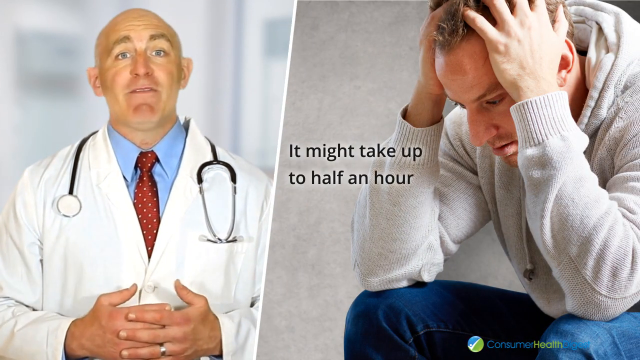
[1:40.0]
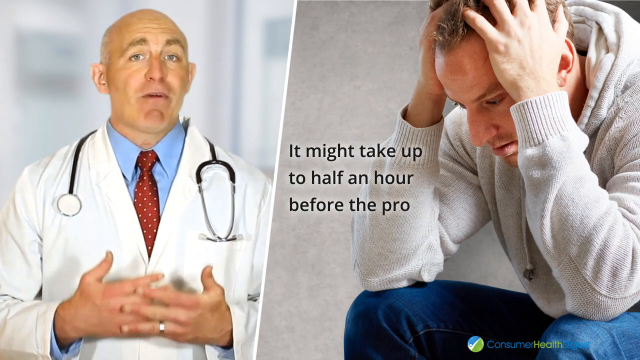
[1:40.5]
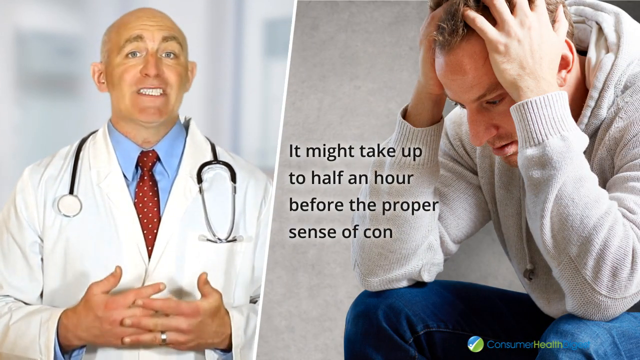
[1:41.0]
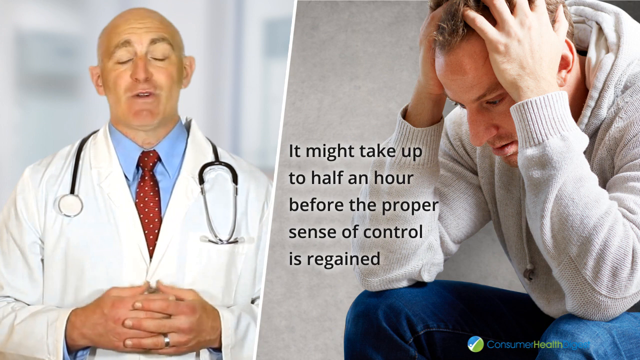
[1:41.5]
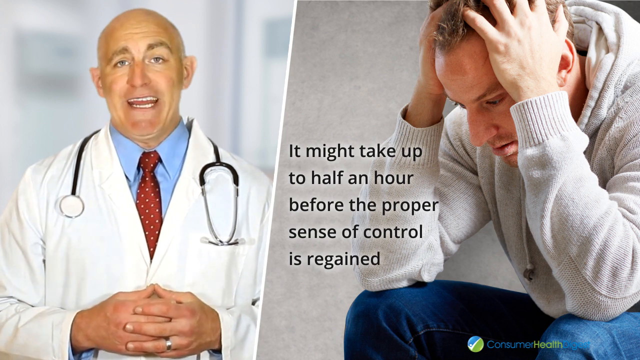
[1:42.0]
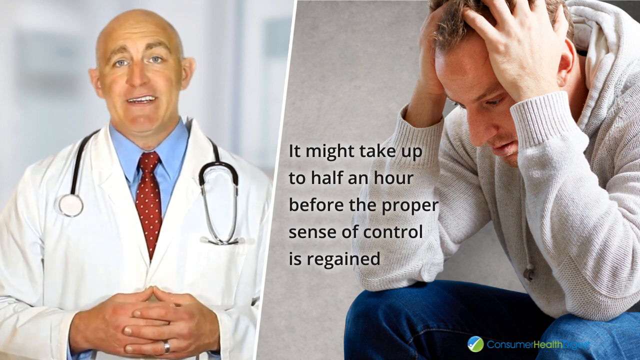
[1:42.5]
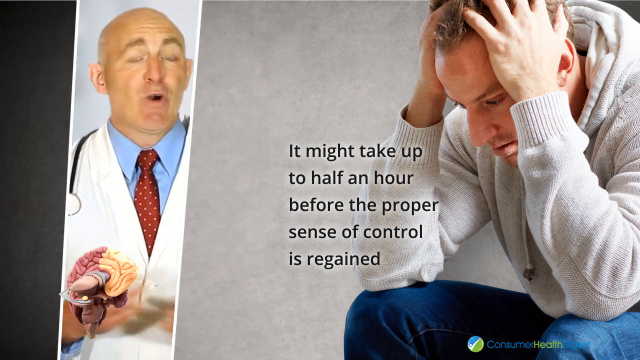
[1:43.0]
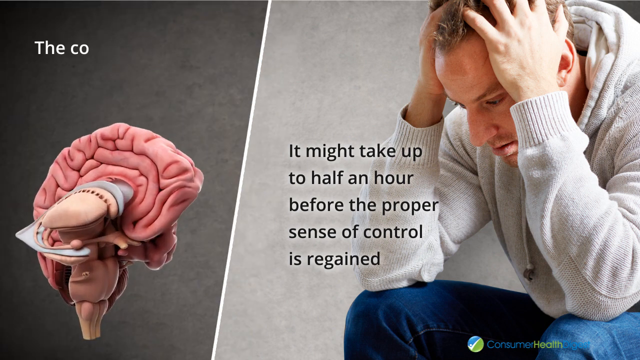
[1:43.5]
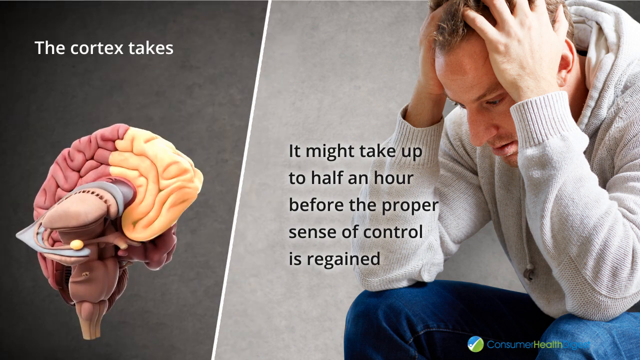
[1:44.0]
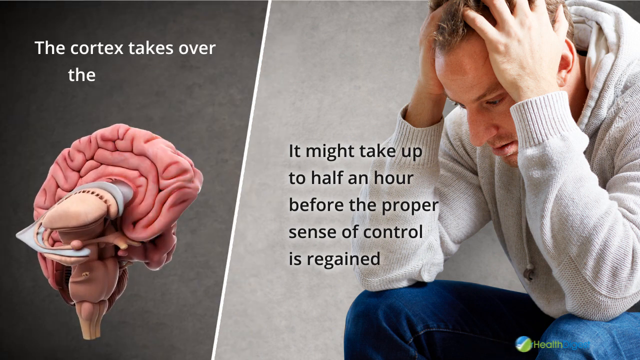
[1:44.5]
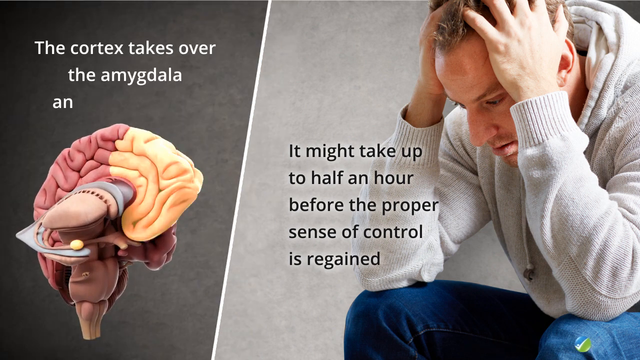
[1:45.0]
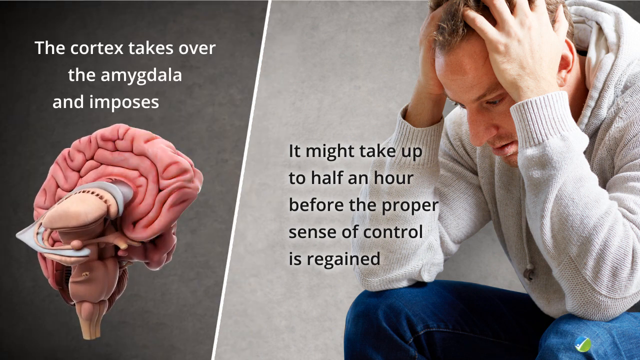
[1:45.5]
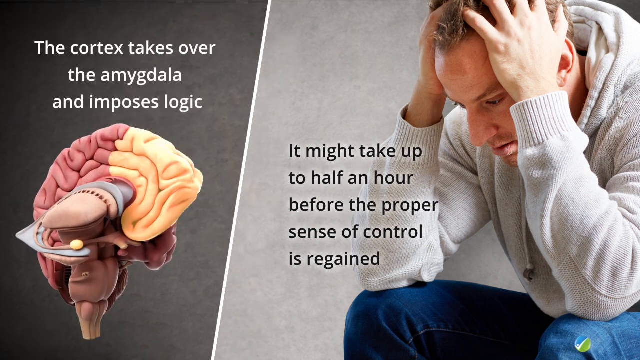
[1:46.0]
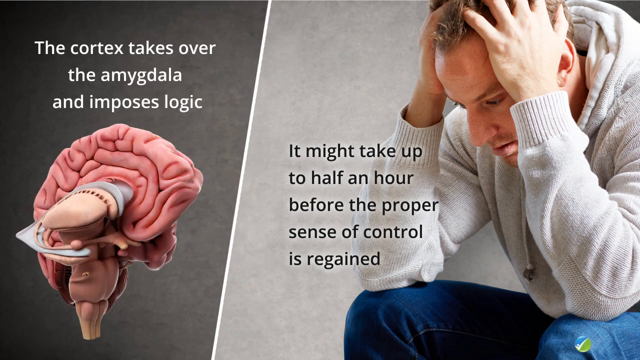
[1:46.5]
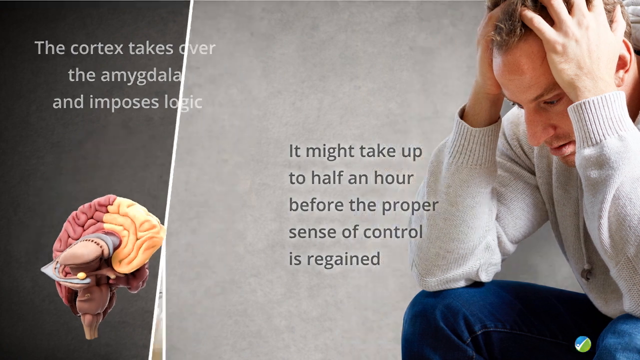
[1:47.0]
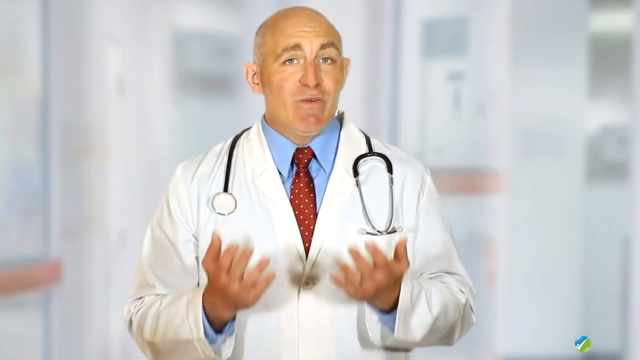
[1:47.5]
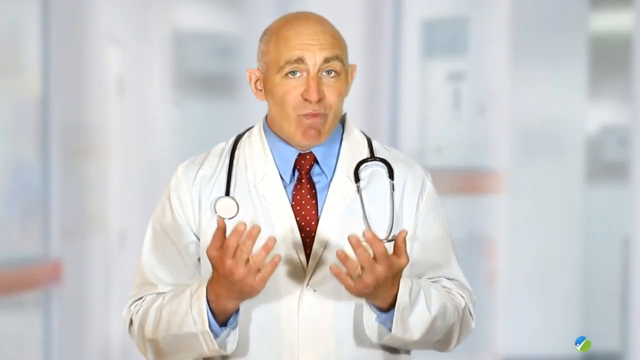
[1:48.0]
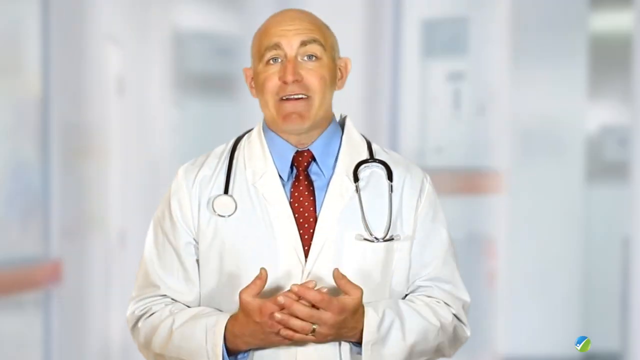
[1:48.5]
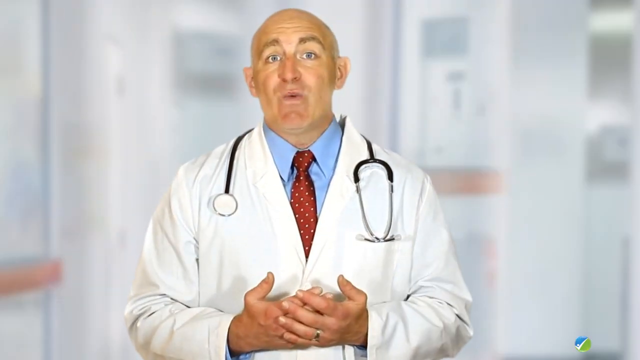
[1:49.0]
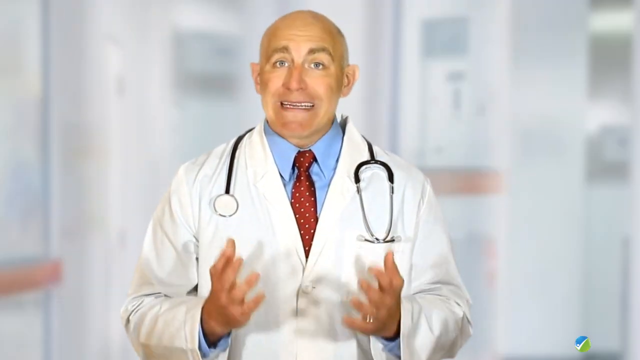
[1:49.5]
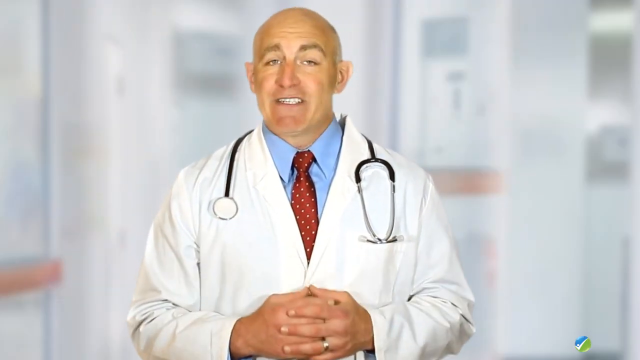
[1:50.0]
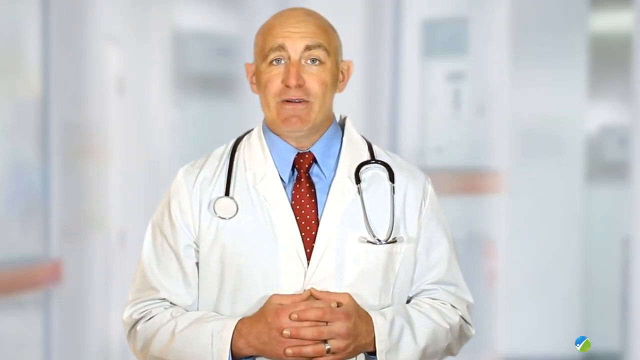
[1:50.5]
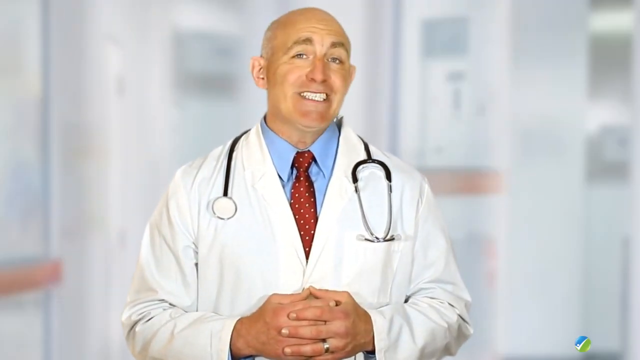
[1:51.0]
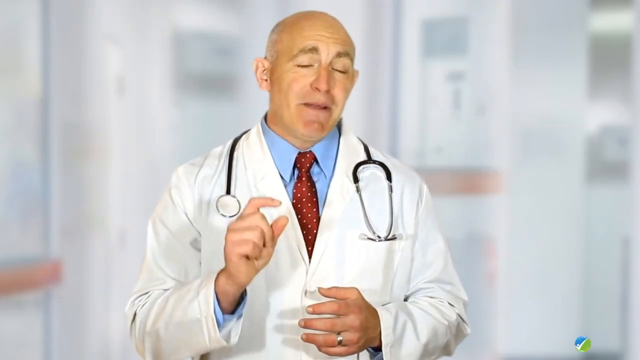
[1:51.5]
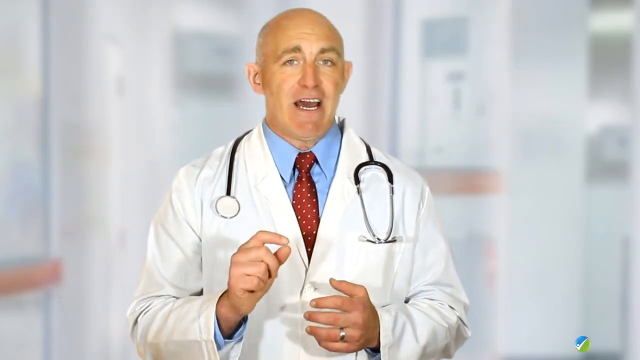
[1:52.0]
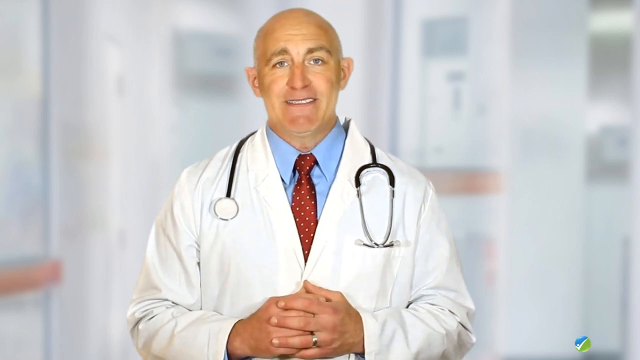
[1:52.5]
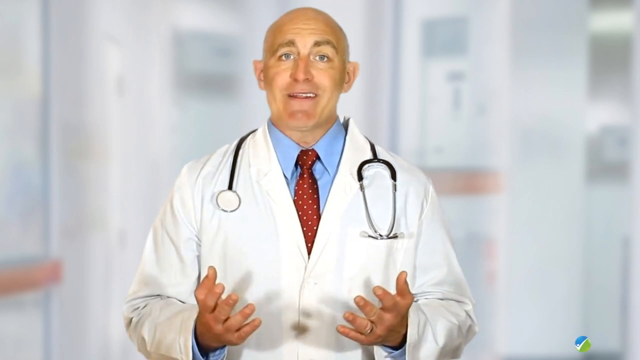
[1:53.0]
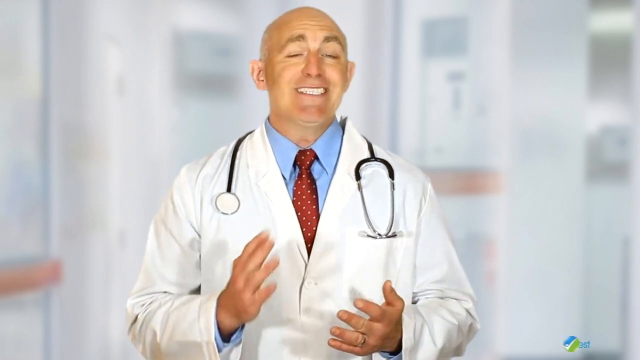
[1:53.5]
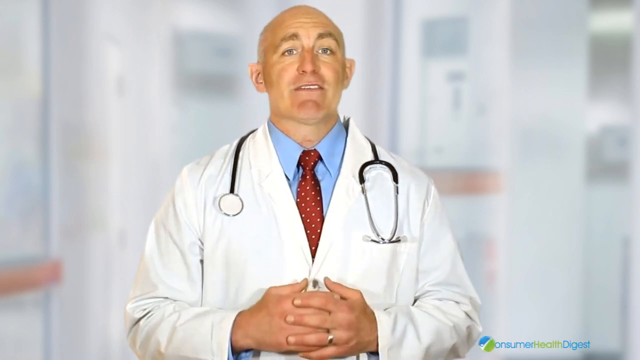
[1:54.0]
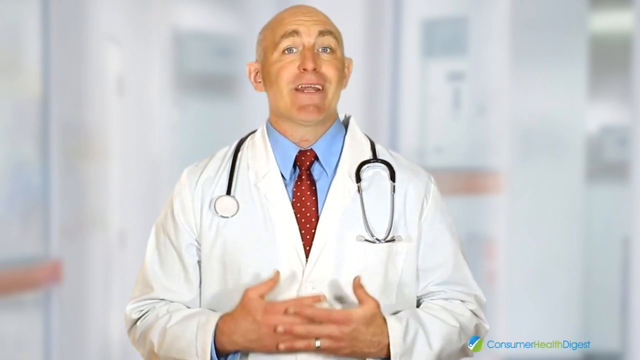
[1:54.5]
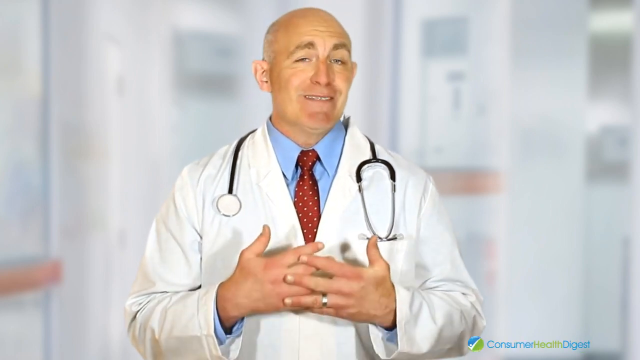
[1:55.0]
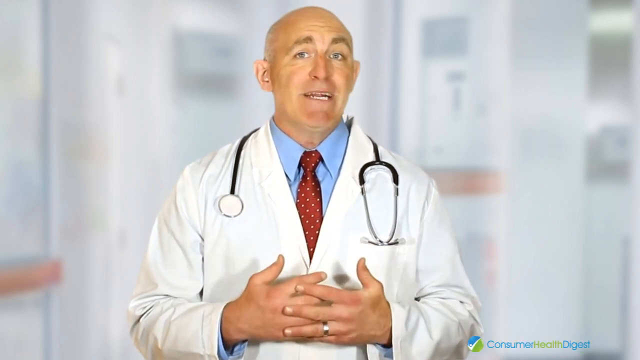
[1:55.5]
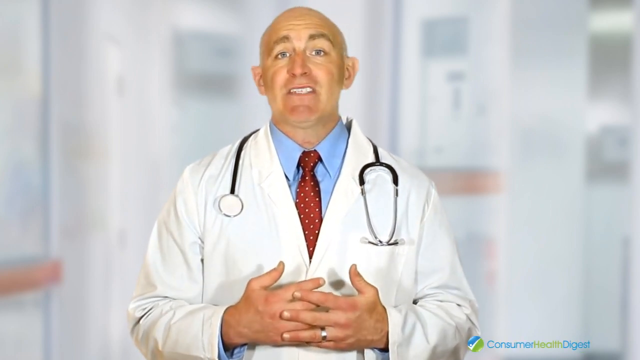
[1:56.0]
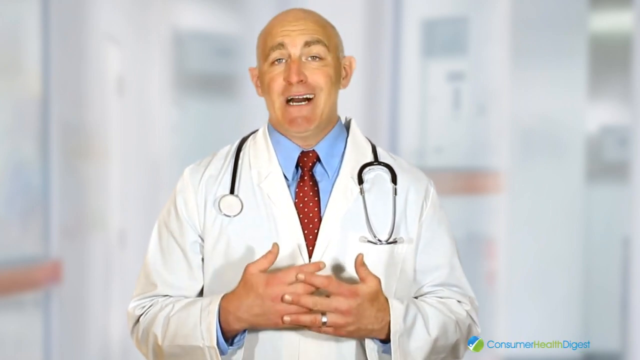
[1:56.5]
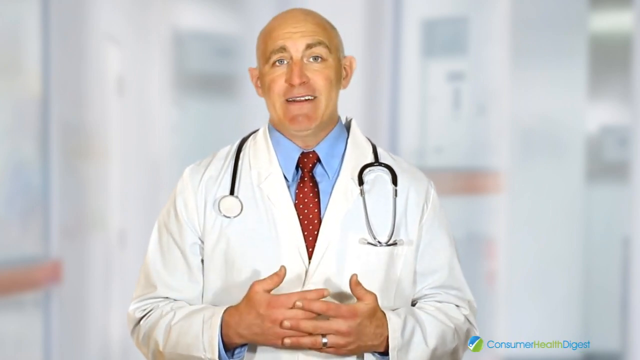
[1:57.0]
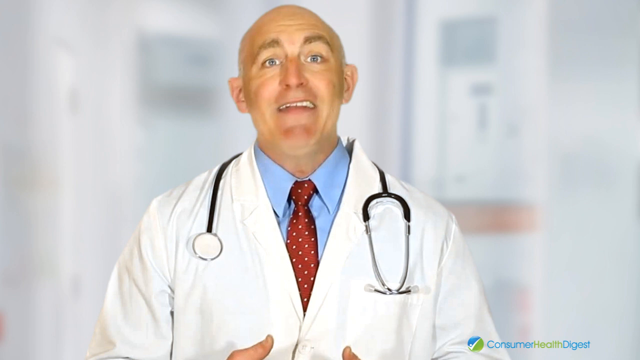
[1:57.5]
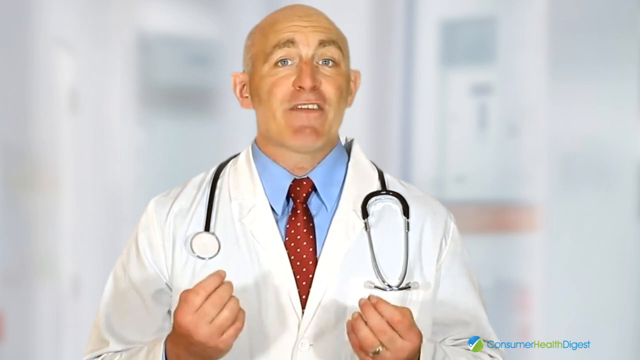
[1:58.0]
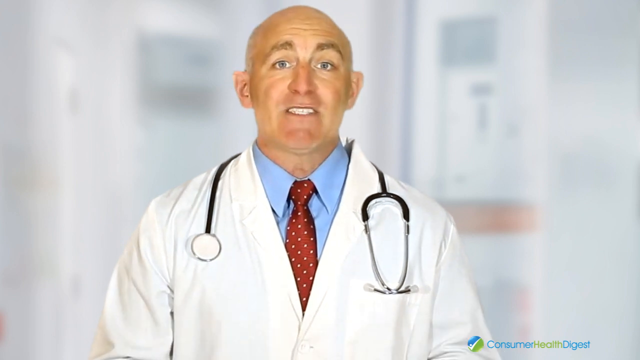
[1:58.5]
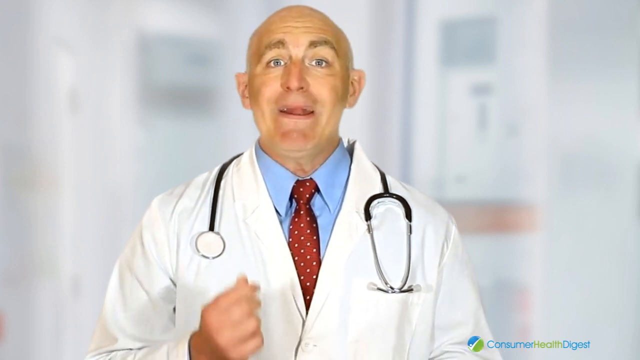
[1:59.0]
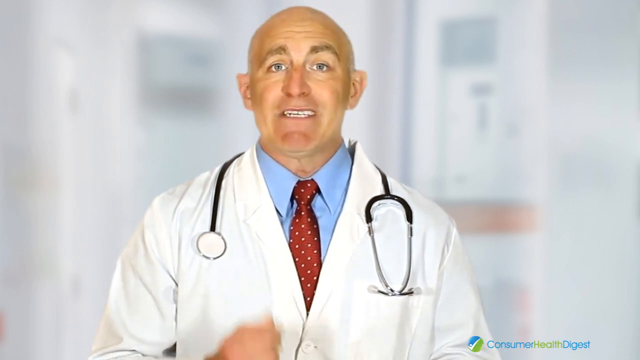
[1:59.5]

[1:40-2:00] The man holding his hands on his head appears with text reading "it might take up to a half an hour before the proper sense of control is regained." On the left side of the screen, the video goes back to the brain, which is highlighted, with text reading "the cortex takes over the amygdala and imposes logic." The video cuts back to the doctor, still in the center of the screen, talking. The presentation seems to be about how the brain responds to anger or other stimuli and what can be done for the brain to reassert control and calm down. The doctor is still an older, bald white man wearing a lab coat and a stethoscope.